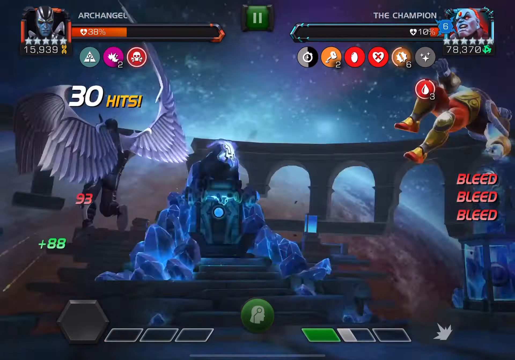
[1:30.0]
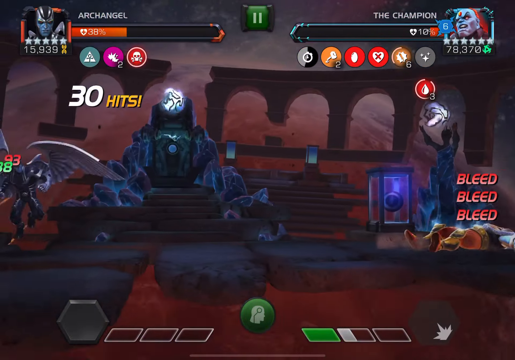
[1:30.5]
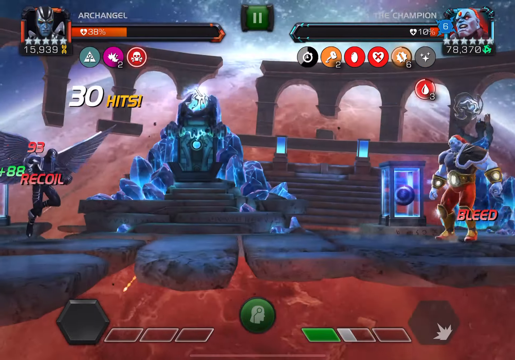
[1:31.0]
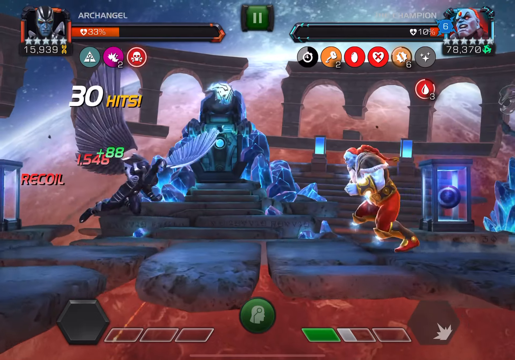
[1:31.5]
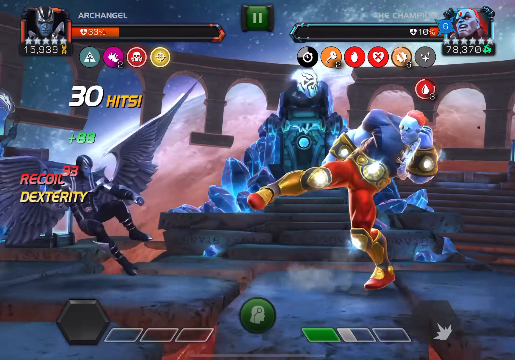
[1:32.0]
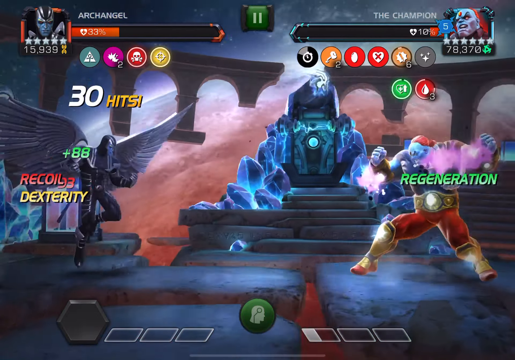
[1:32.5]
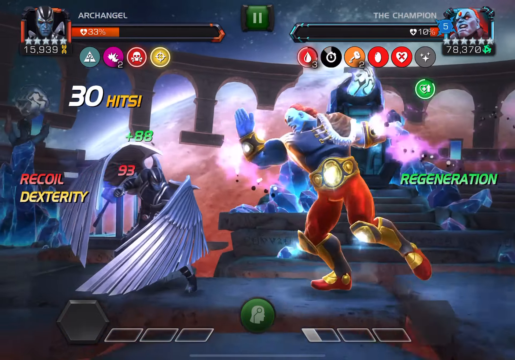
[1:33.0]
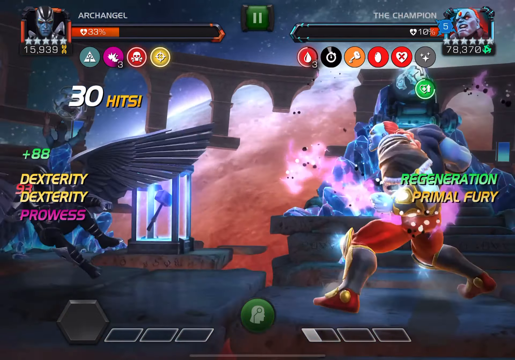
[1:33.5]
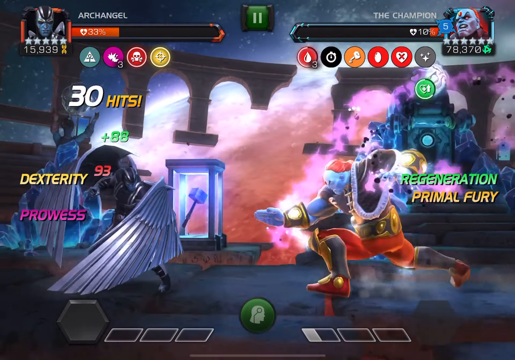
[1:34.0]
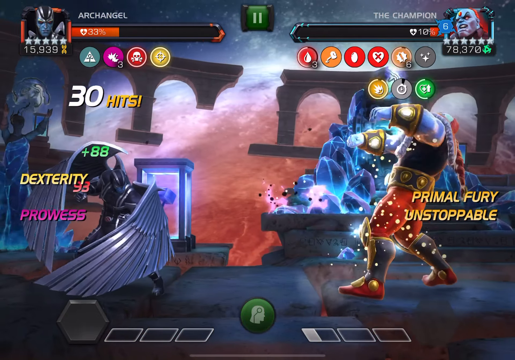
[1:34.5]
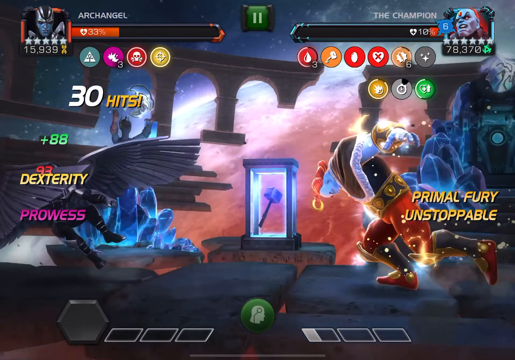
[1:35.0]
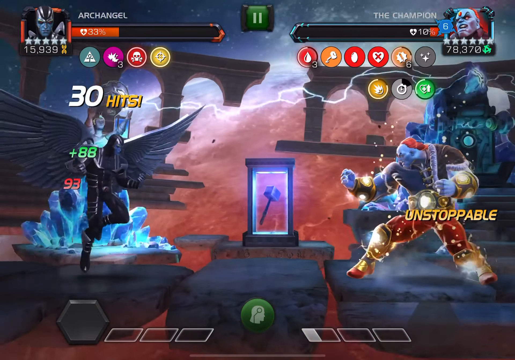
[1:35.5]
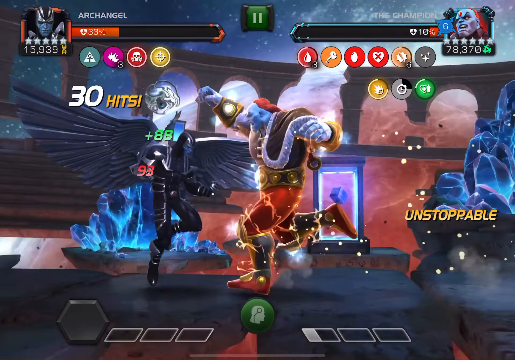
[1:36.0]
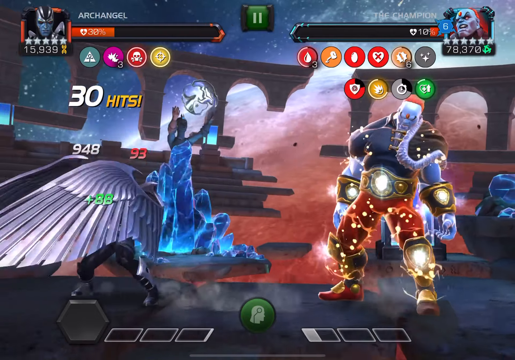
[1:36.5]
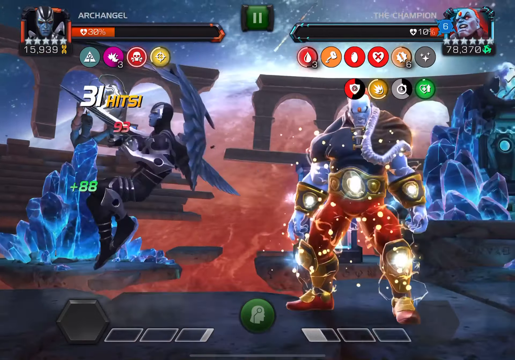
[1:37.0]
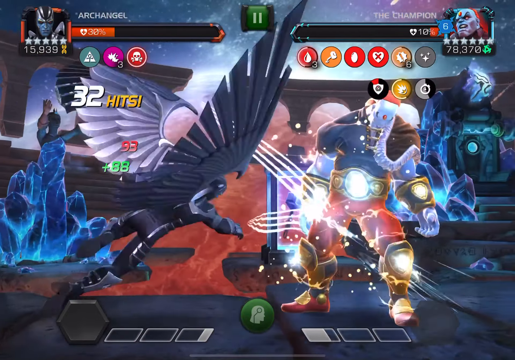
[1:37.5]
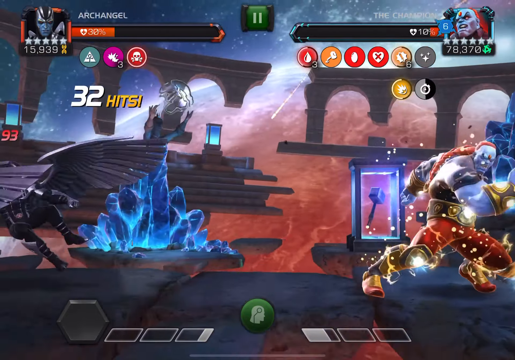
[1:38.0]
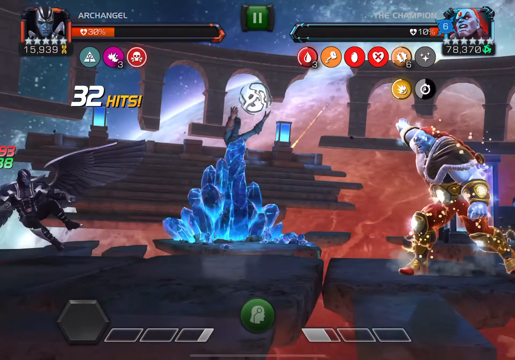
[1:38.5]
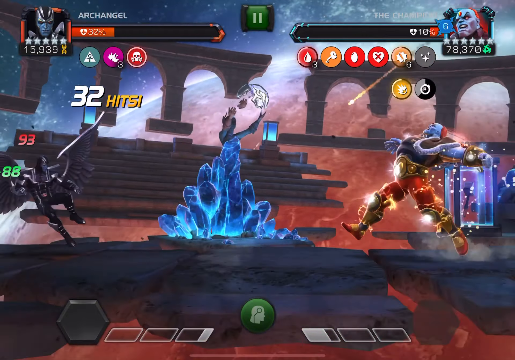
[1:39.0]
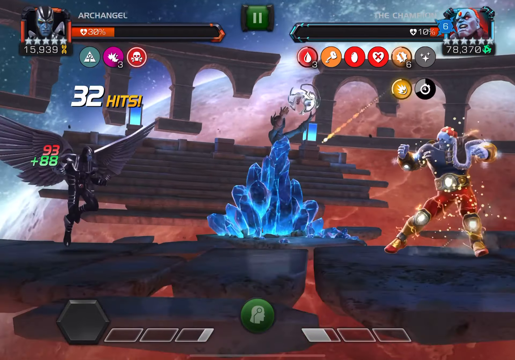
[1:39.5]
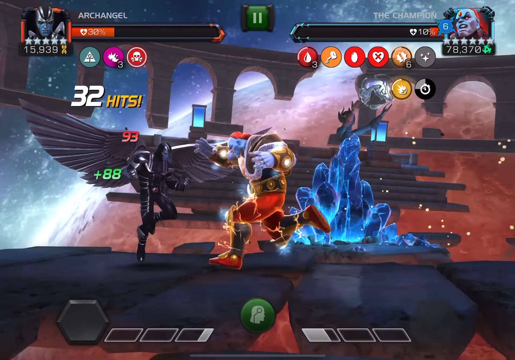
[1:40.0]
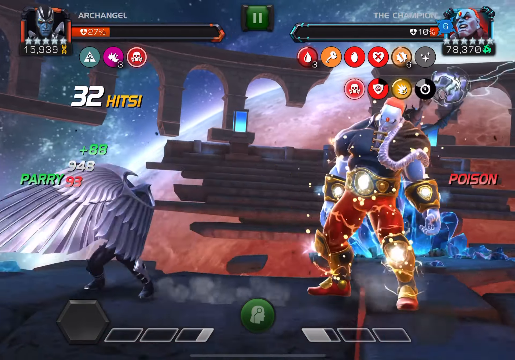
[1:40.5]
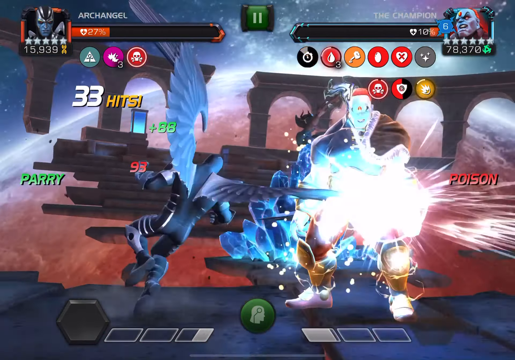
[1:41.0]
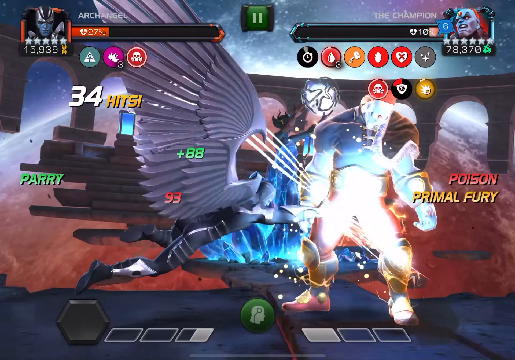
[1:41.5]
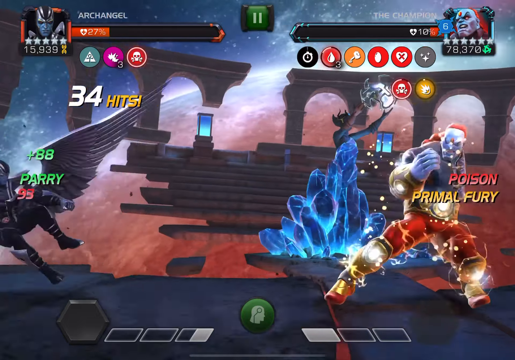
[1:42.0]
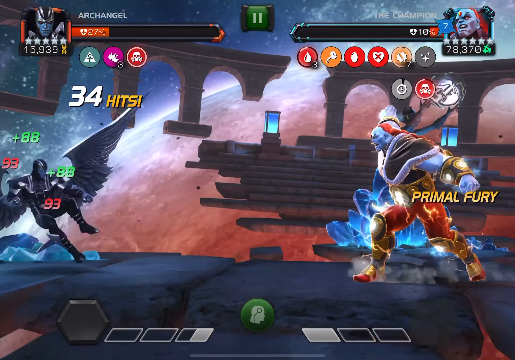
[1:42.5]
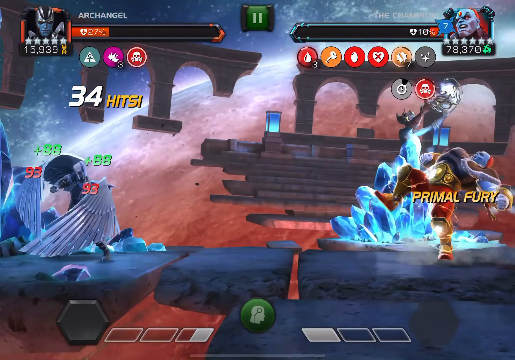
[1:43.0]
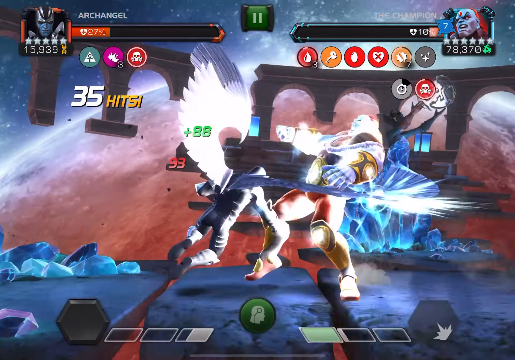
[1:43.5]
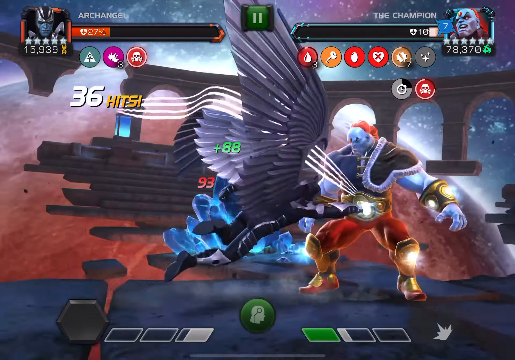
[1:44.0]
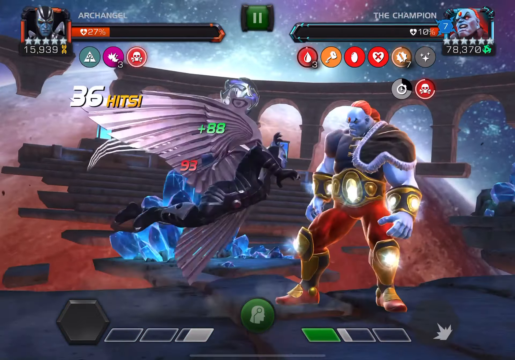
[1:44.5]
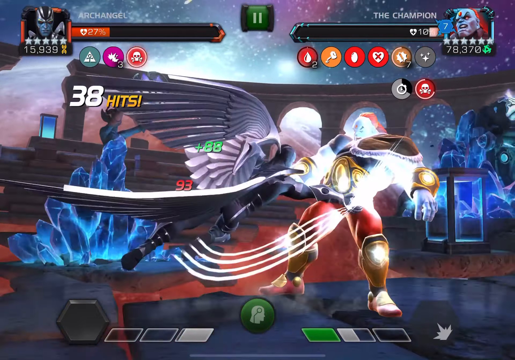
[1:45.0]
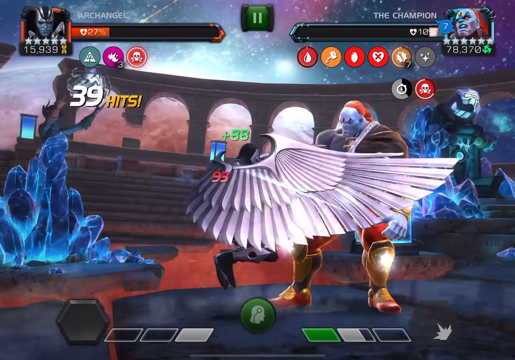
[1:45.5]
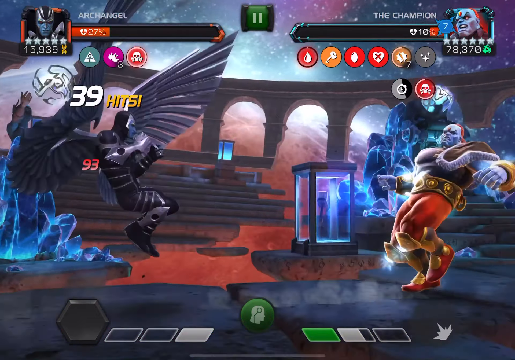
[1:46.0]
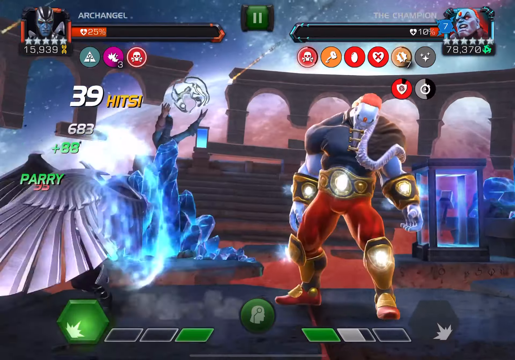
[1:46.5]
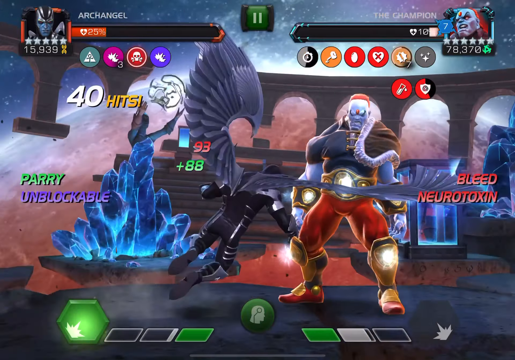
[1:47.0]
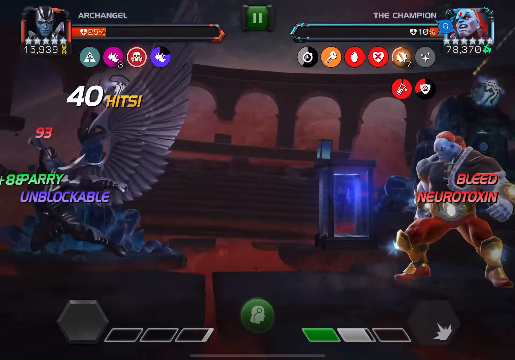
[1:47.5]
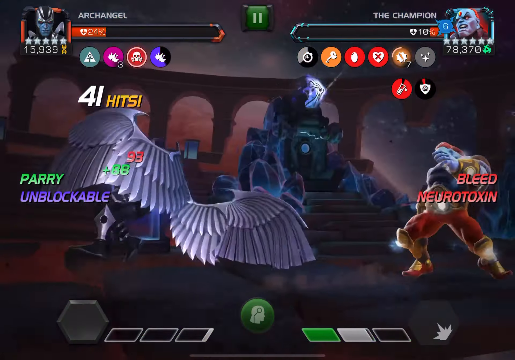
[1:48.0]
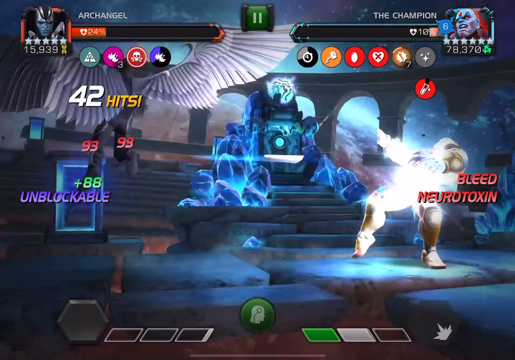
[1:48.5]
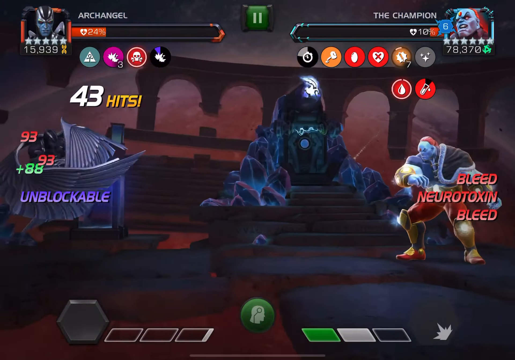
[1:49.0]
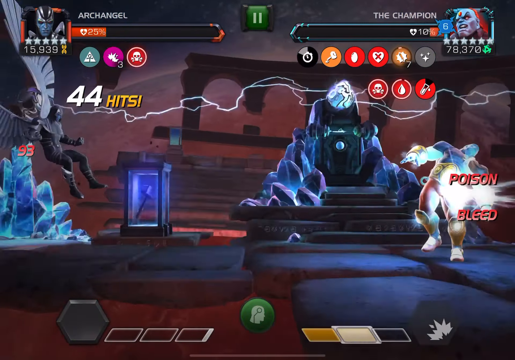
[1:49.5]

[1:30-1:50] Archangel's health at the top left is 39, and the Champion's at the top right is 10%. Archangel has landed a 30-hit combo, and the Champion has a bleed affliction. They are fighting on some stone, almost like a floating coliseum in the void of space, with parts of the coliseum floating around and some blue crystals in the background. The Champion rolls up and tries to kick Archangel, who keeps guarding and backing off, landing some hits in between the guards. Despite a bunch of status afflictions and a 44-hit combo, the Champion's health does not drop below 10%. The Champion is a blue man with an orange gem on his head, orange hair, and what look like gold bracelets, boots and a belt. Archangel is a full black angel, something like a ninja.